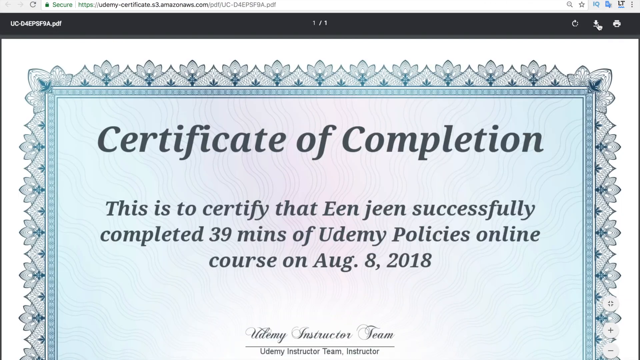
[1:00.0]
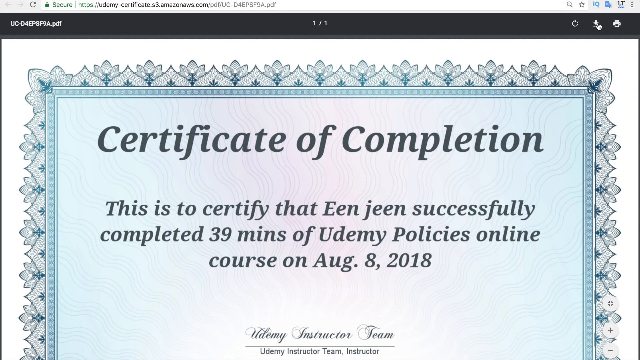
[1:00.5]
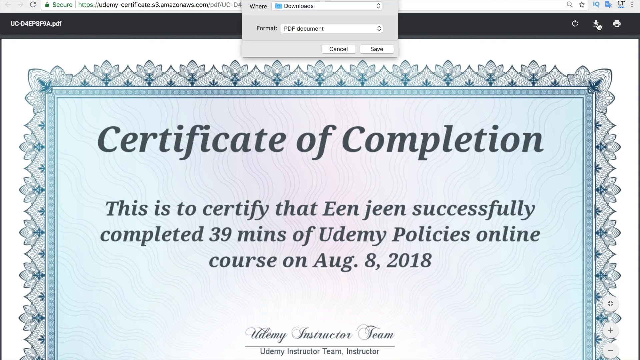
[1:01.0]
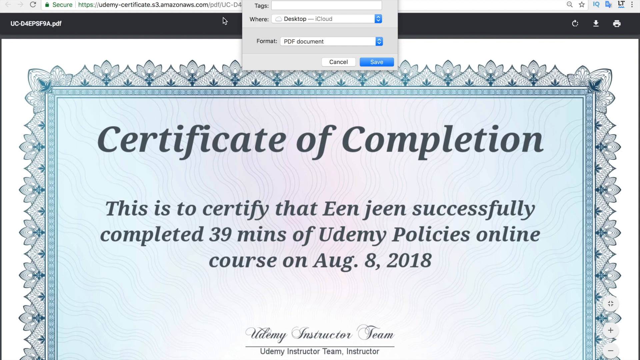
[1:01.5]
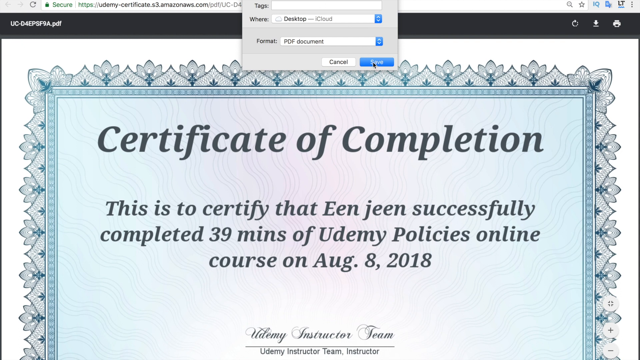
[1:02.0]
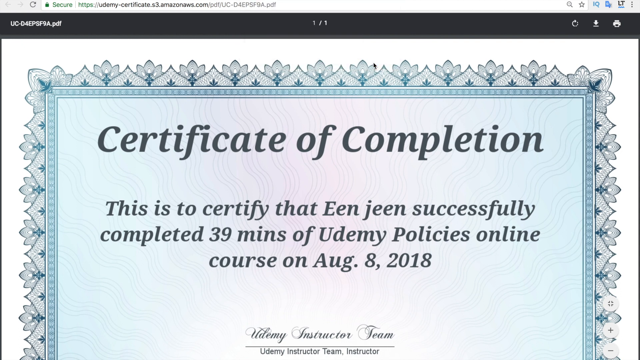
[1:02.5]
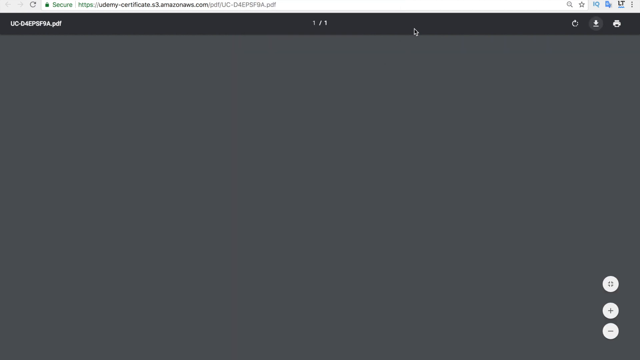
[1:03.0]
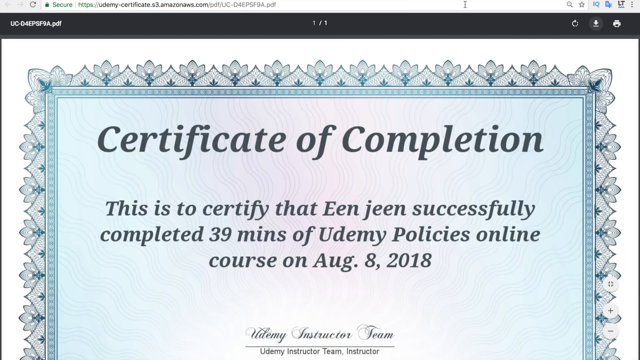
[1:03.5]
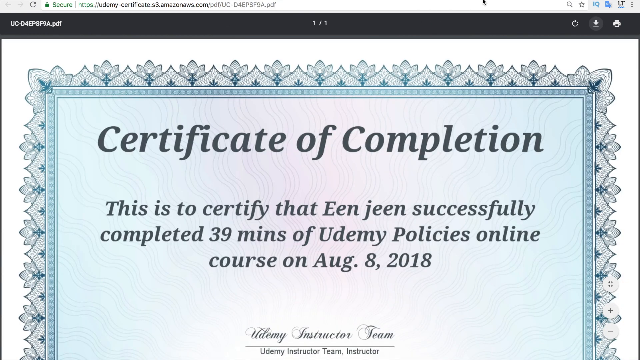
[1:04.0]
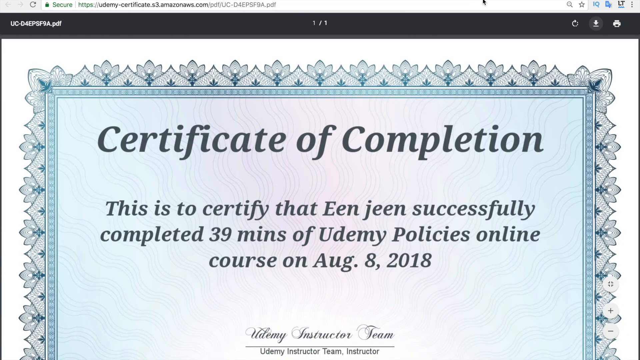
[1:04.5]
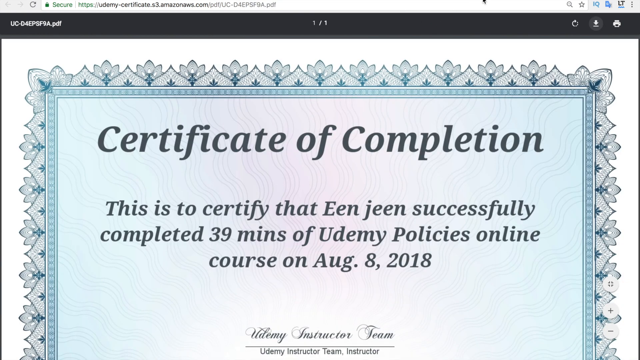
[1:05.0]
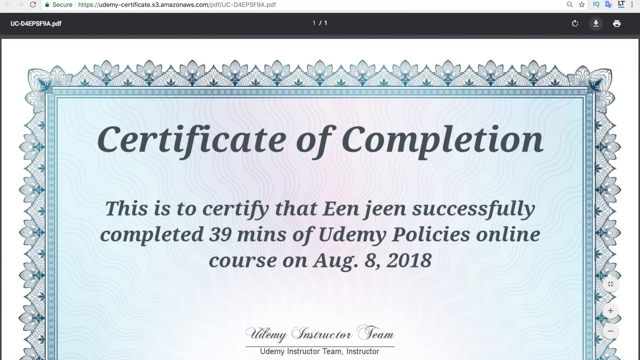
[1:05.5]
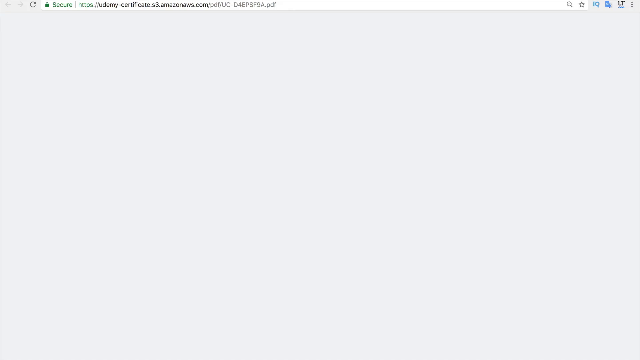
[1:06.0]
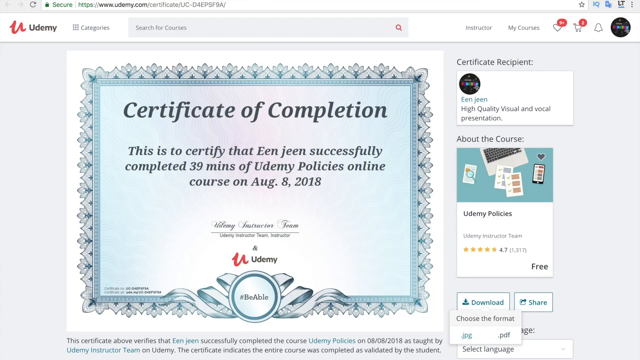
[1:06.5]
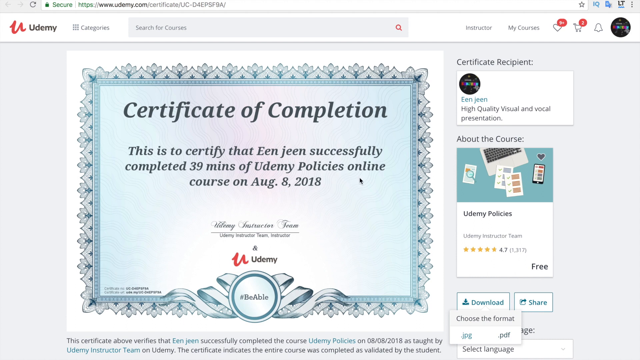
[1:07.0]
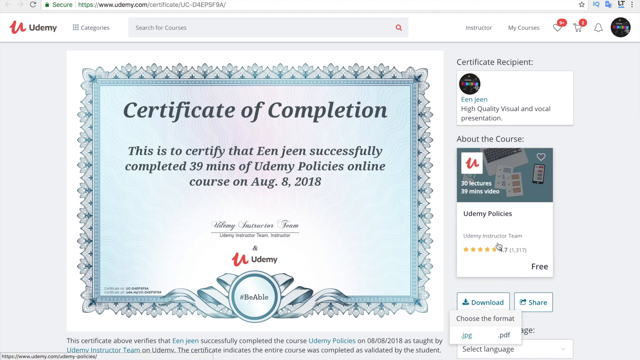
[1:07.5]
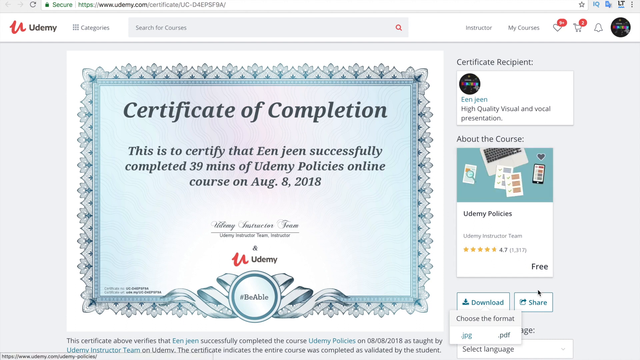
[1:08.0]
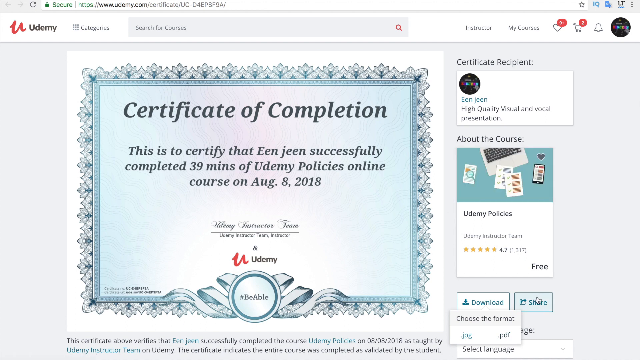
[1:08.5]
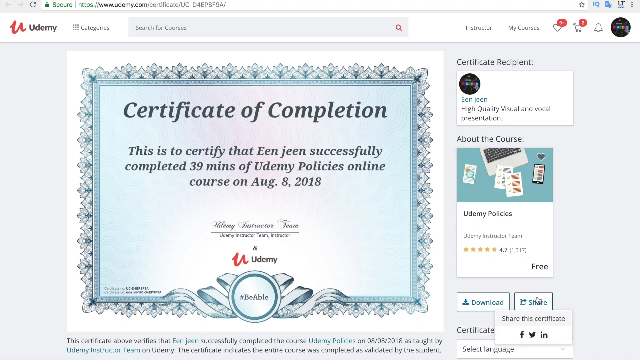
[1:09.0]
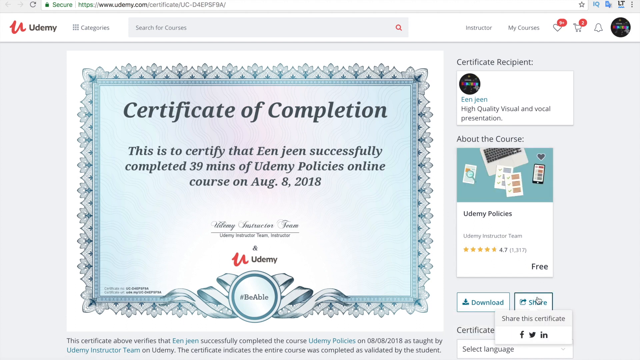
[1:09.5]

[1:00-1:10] After the download, a full-screen view of the top portion of the PDF is opened on the computer. A drop-down menu at the top shows a field for tags, where to save it, and the format, with cancel and save buttons below. The cursor hovers over the blue save button and clicks it. The view returns to the Udemy page where the certificate was downloaded. The hand icon of the cursor hovers over the About the Course blurb on the right side of the screen, then moves down to the Share button, where a pop-up shows options for sharing the certificate, with Facebook, Twitter and LinkedIn icons below it.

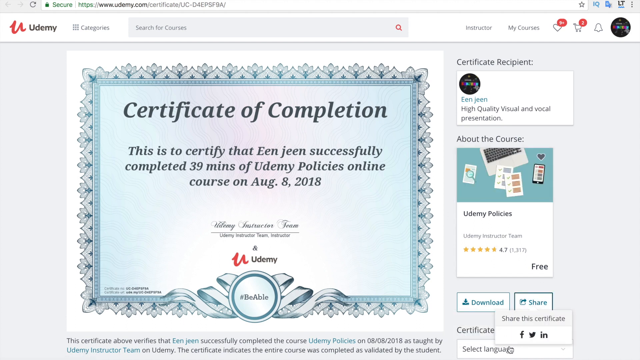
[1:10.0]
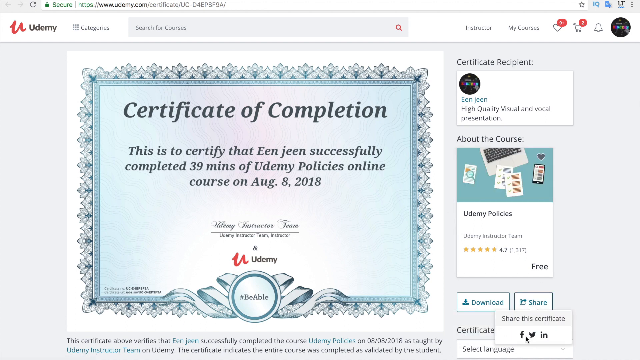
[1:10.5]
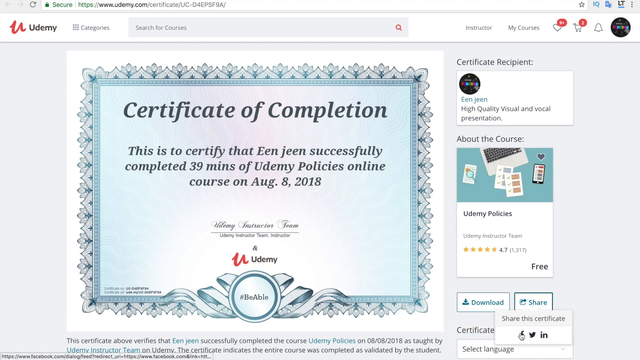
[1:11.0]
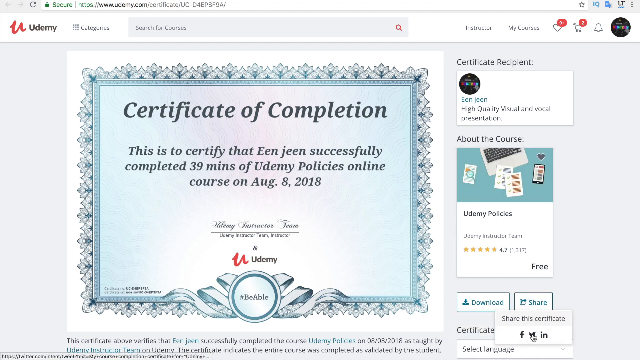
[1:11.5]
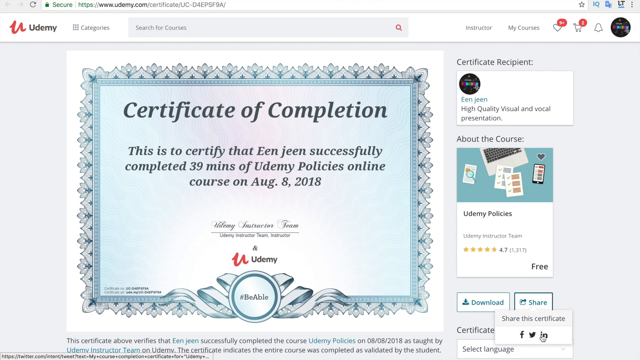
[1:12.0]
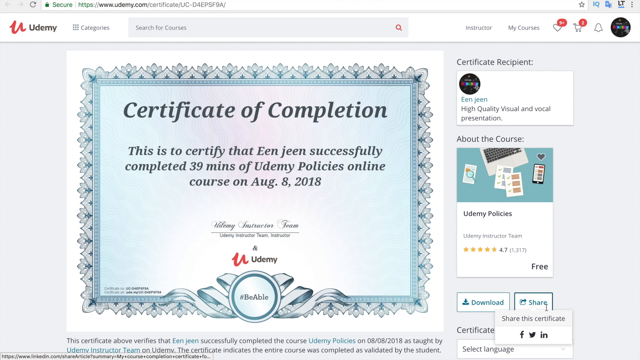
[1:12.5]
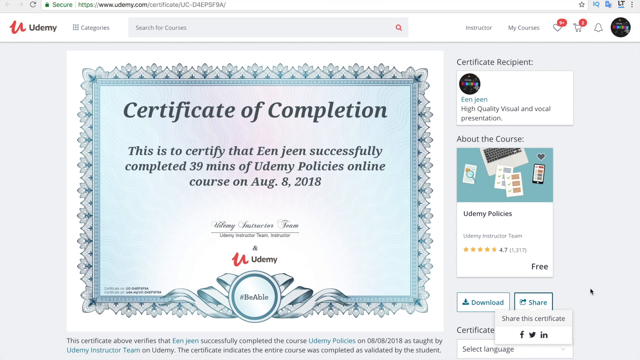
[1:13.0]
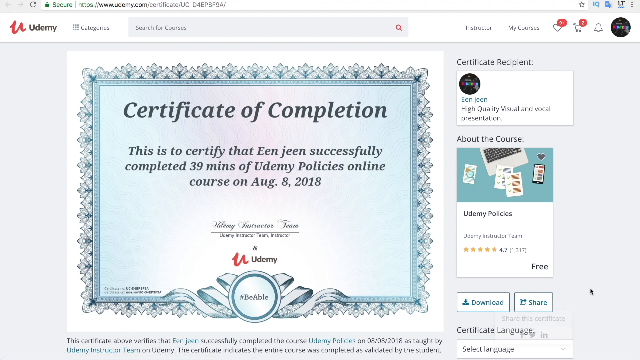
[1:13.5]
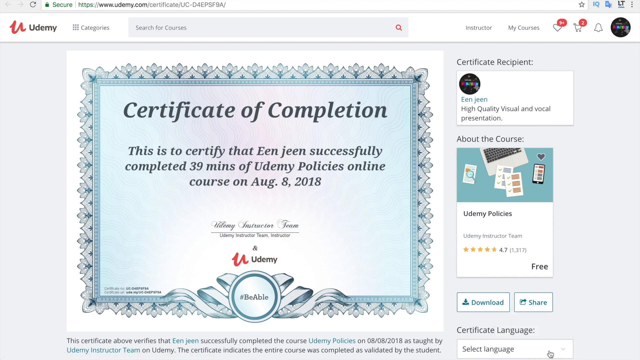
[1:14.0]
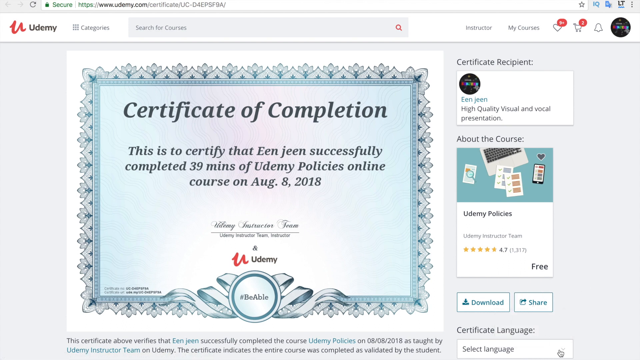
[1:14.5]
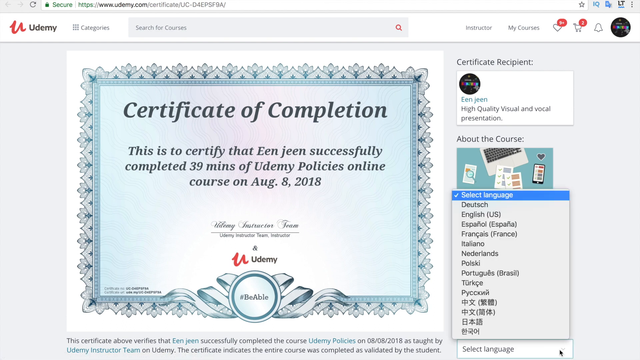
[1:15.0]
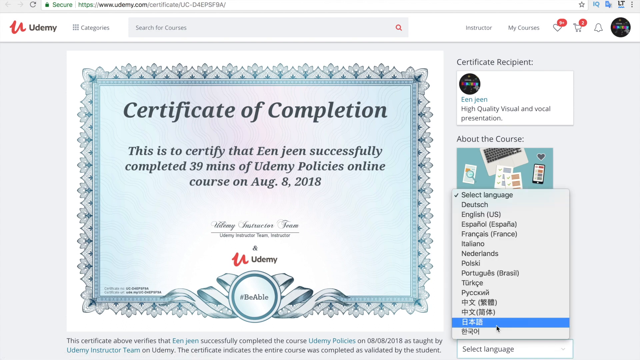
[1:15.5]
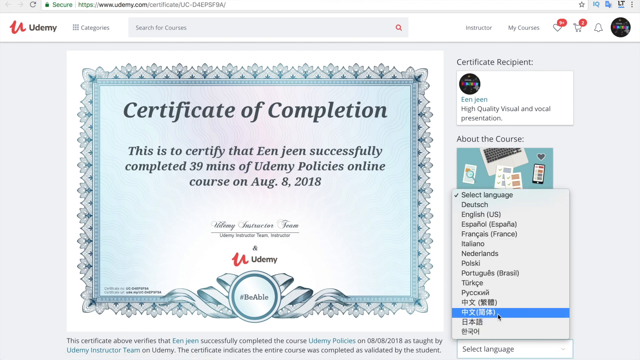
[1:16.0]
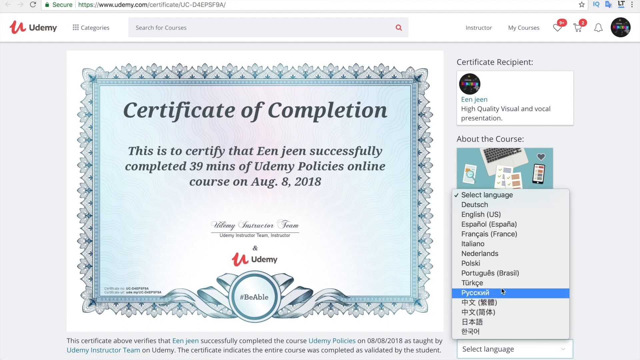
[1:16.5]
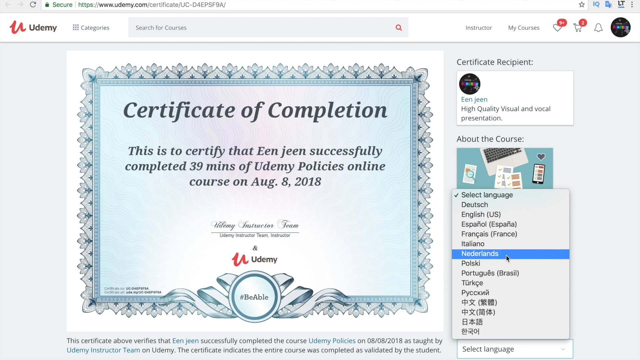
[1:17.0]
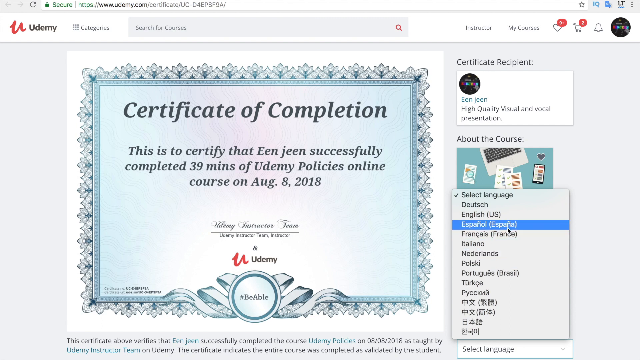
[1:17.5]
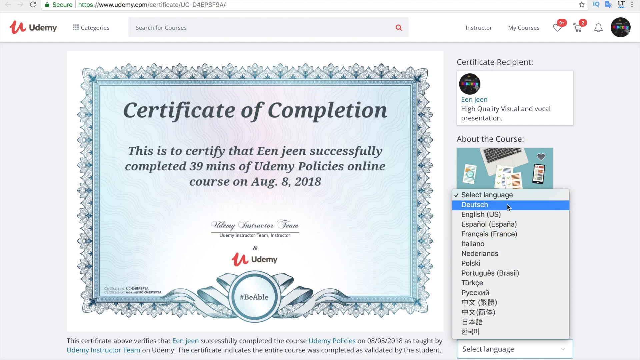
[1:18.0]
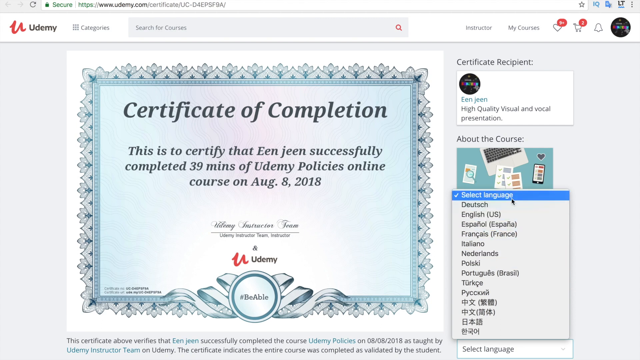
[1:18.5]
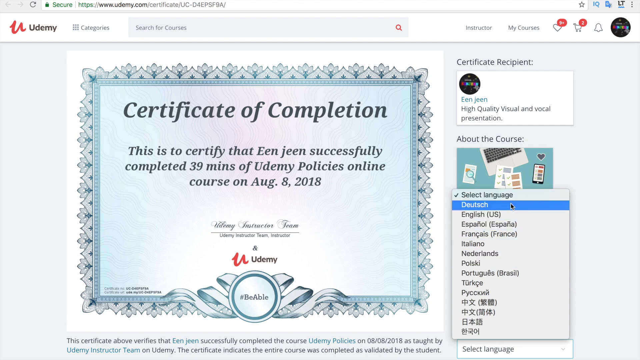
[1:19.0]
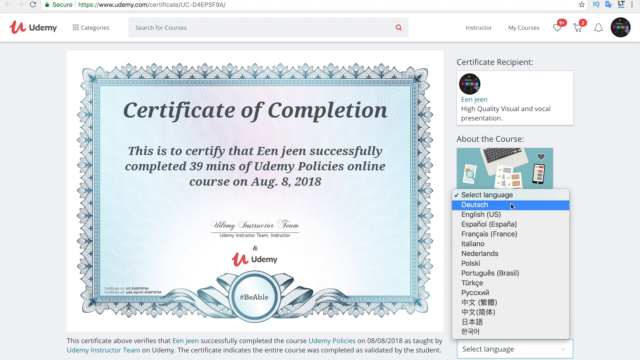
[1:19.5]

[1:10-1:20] On the Certificate of Completion page, the black cursor in the lower right corner hovers over a Select a Language option. A drop-down menu appears with a number of language options. The cursor moves from the bottom to the top of the list, and as it hovers over each language, a blue bar highlights it. On reaching the top, the cursor goes back down one option and hovers over the Deutsch option.